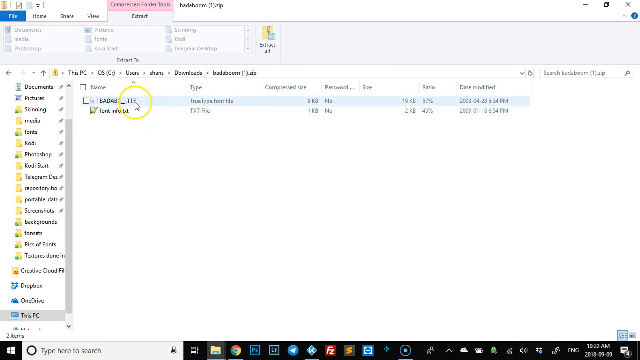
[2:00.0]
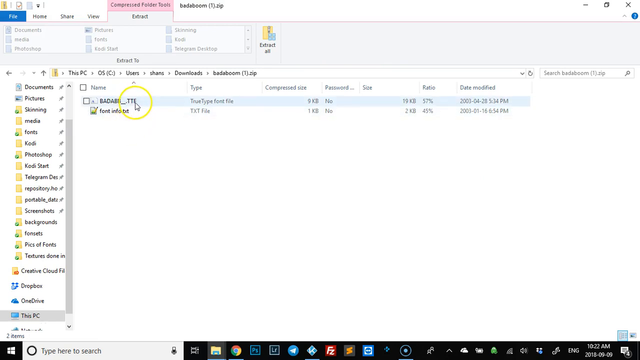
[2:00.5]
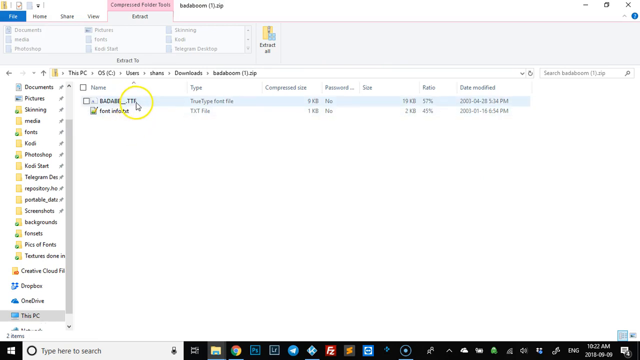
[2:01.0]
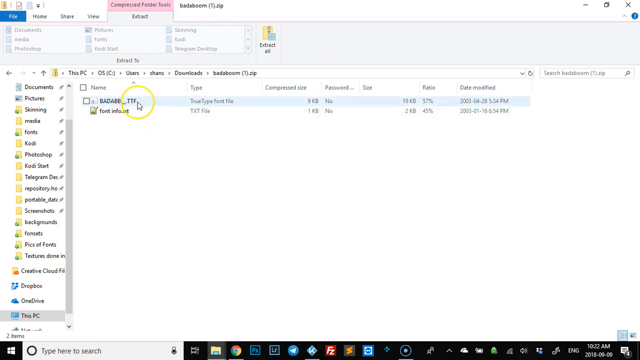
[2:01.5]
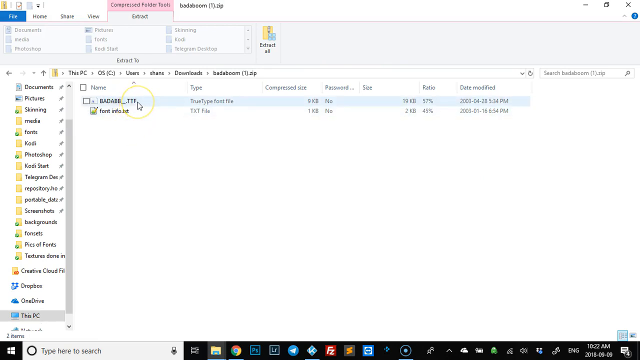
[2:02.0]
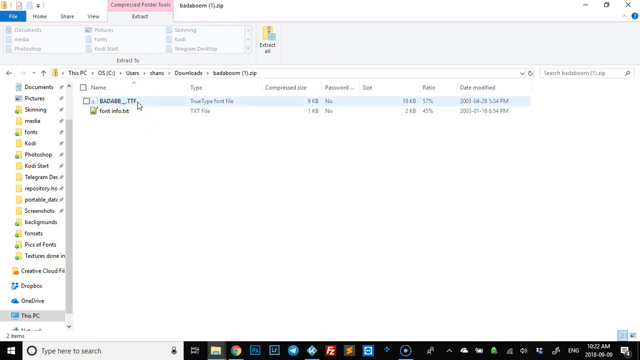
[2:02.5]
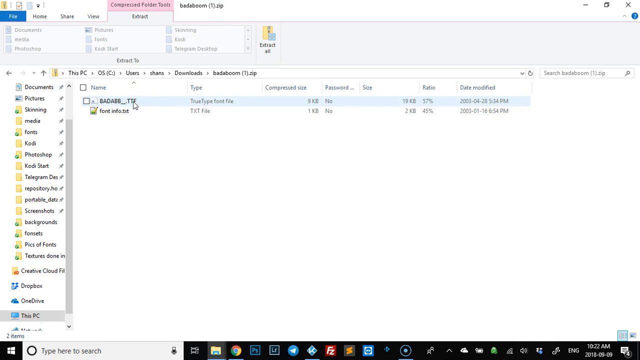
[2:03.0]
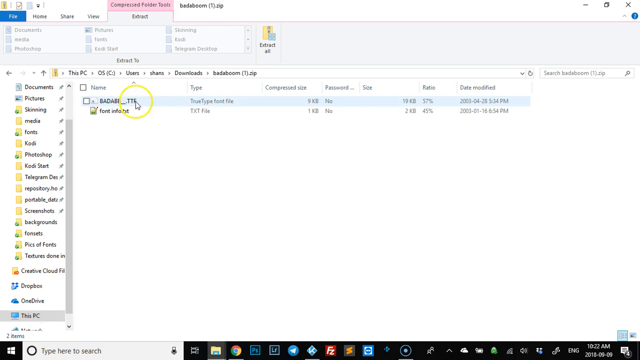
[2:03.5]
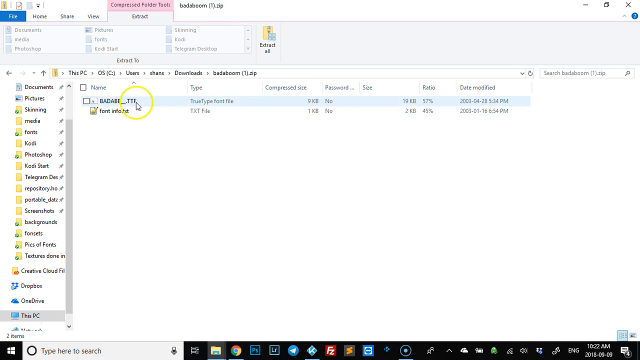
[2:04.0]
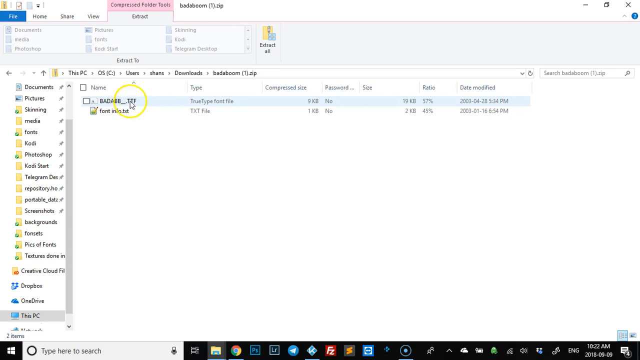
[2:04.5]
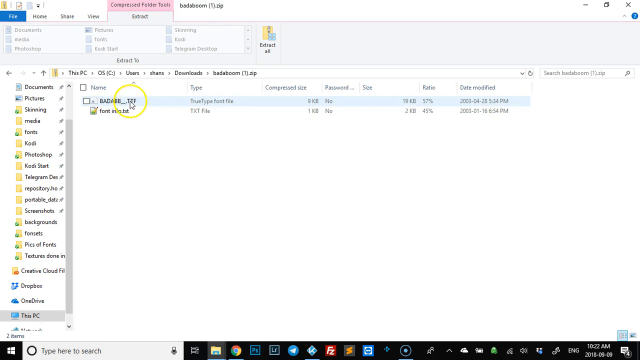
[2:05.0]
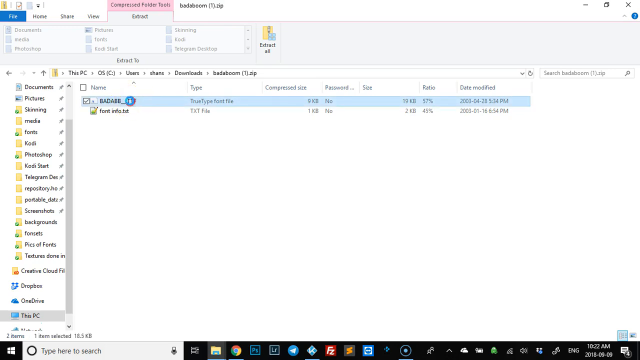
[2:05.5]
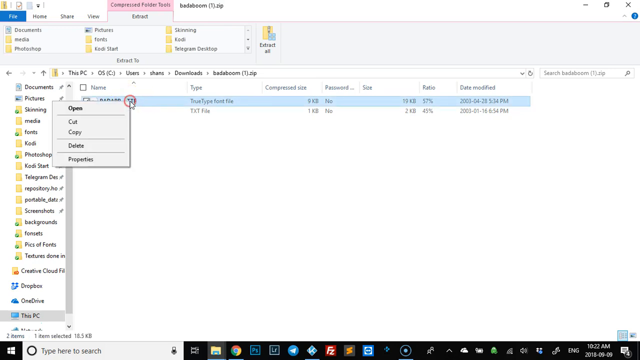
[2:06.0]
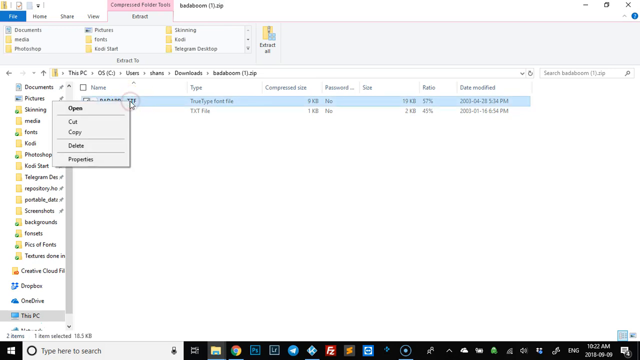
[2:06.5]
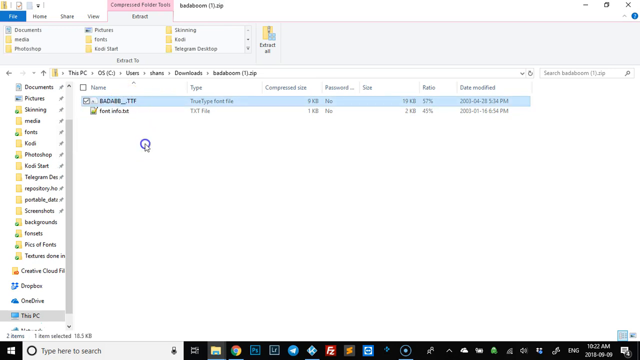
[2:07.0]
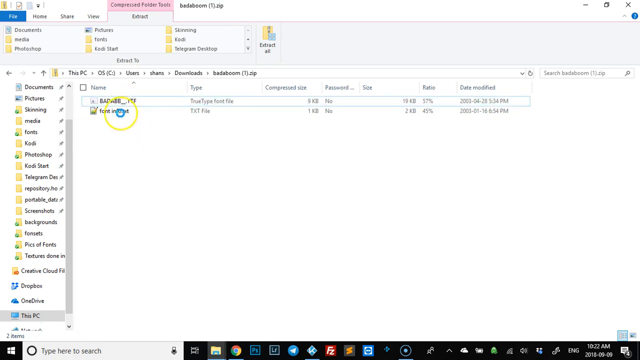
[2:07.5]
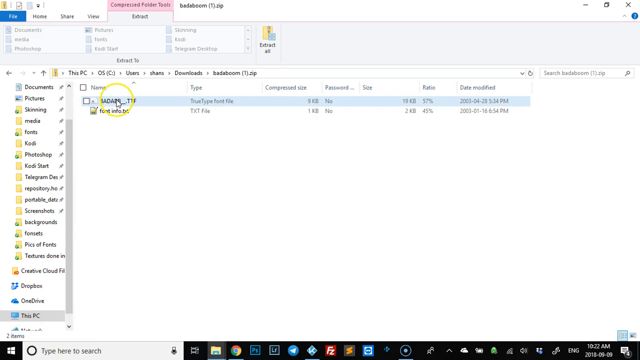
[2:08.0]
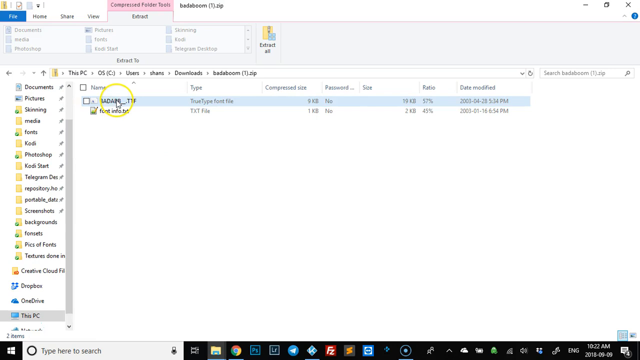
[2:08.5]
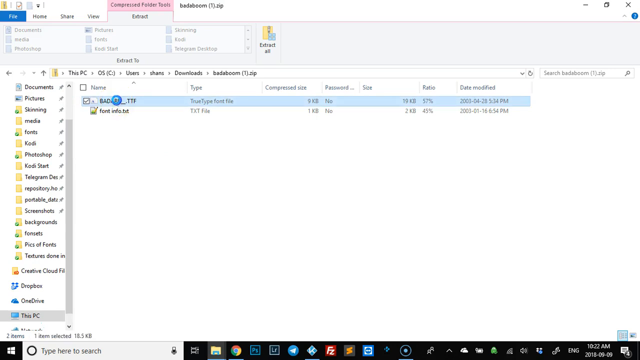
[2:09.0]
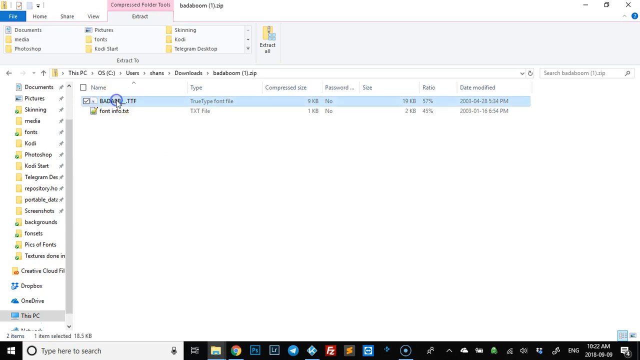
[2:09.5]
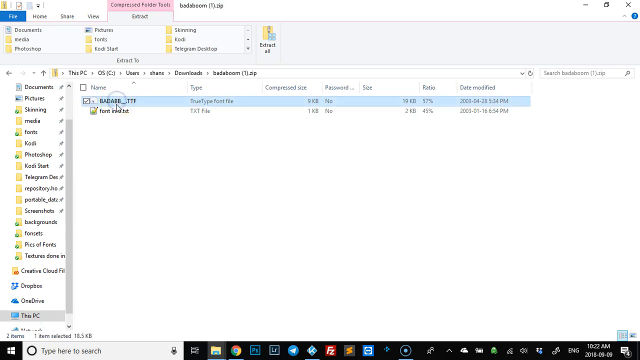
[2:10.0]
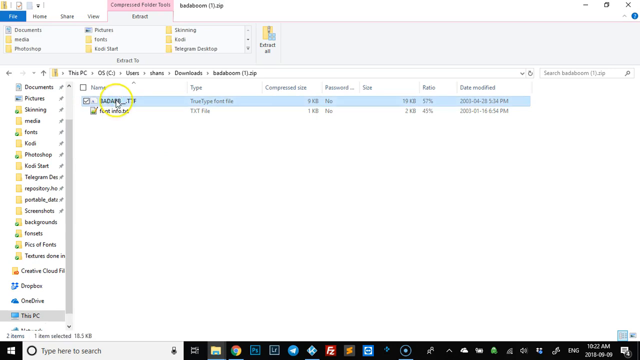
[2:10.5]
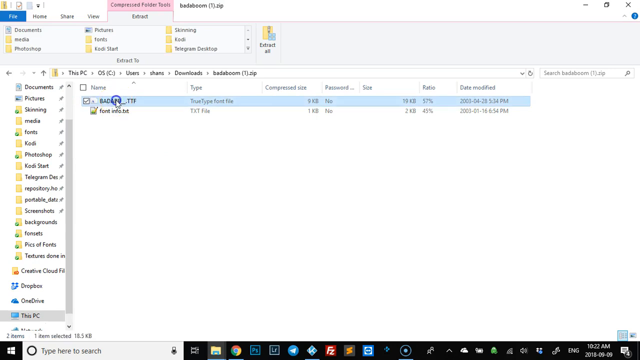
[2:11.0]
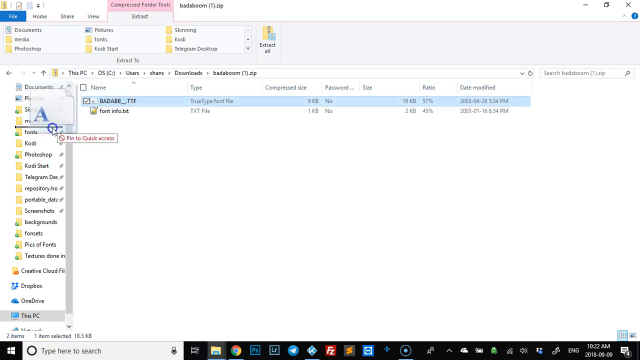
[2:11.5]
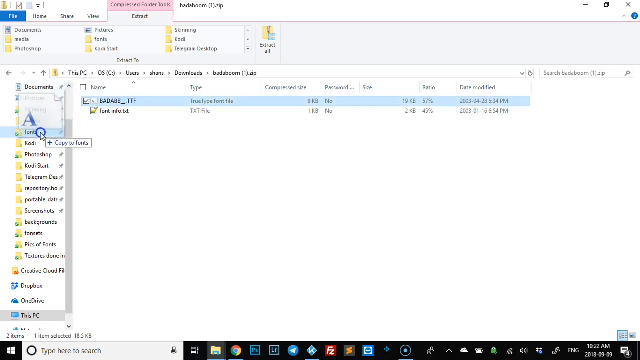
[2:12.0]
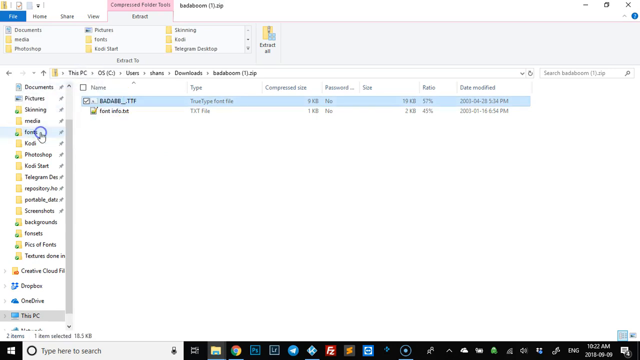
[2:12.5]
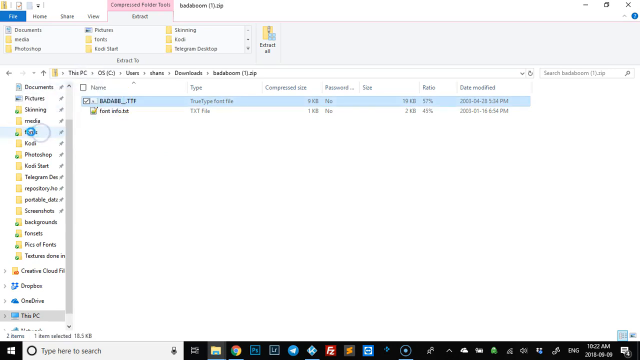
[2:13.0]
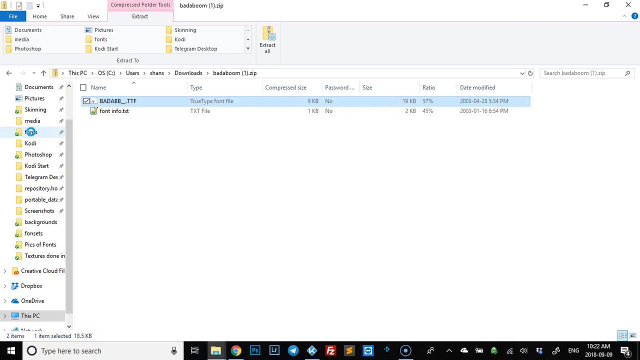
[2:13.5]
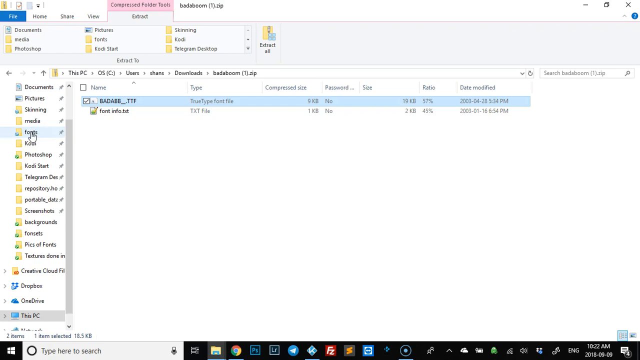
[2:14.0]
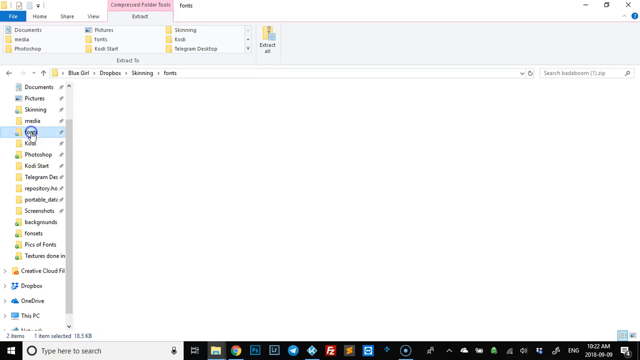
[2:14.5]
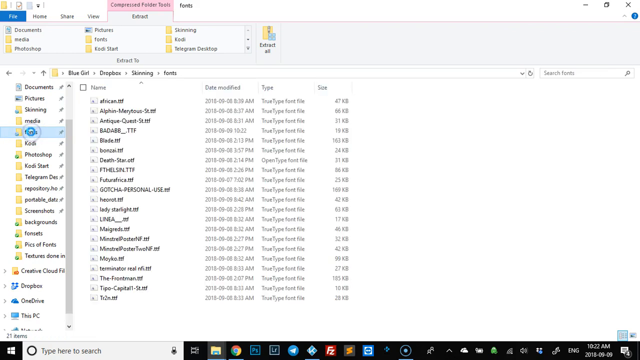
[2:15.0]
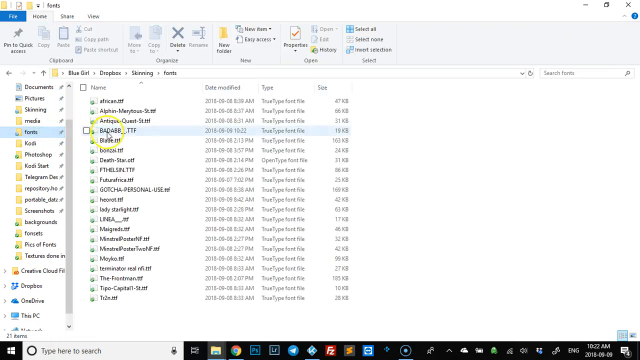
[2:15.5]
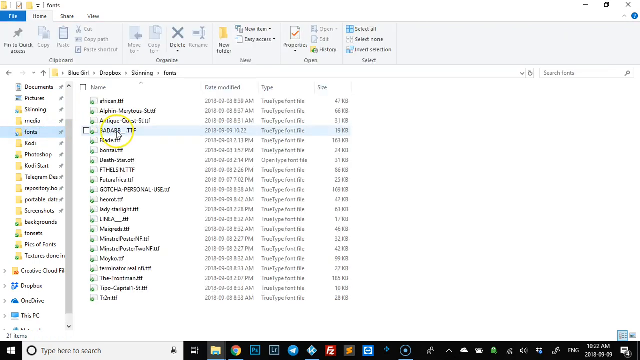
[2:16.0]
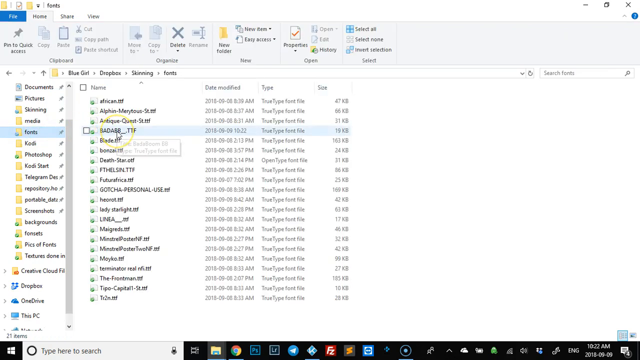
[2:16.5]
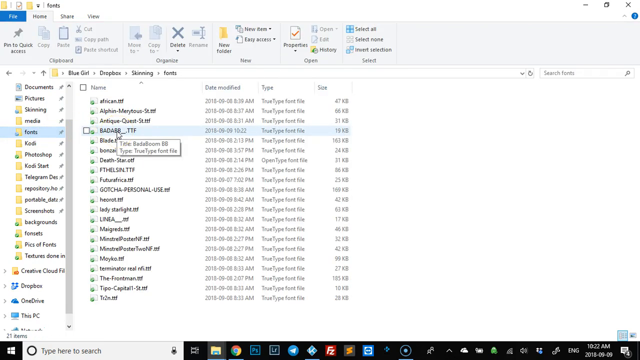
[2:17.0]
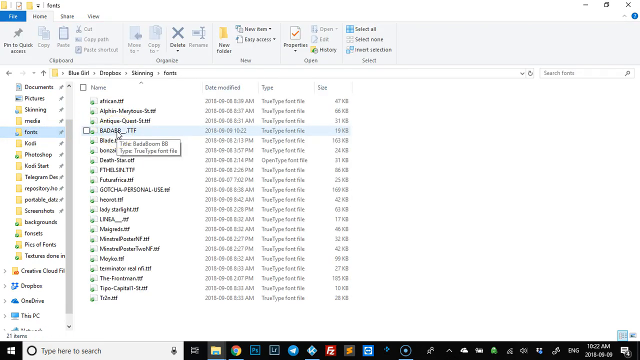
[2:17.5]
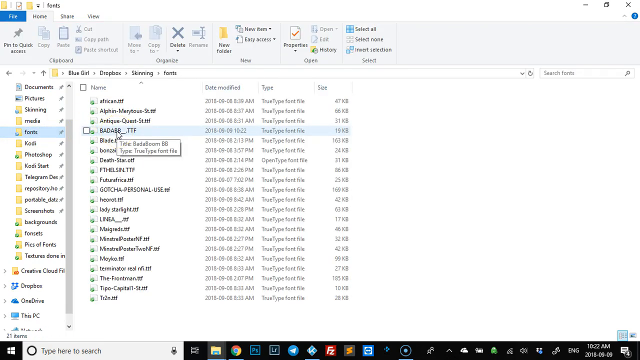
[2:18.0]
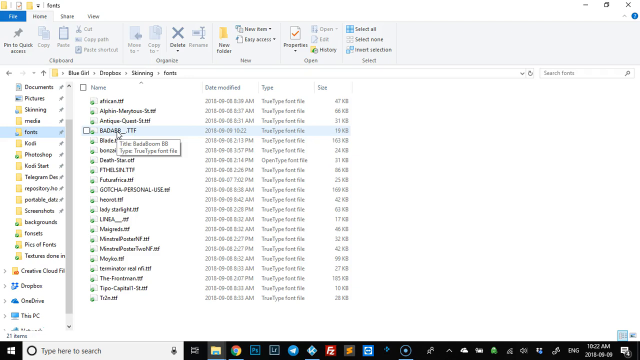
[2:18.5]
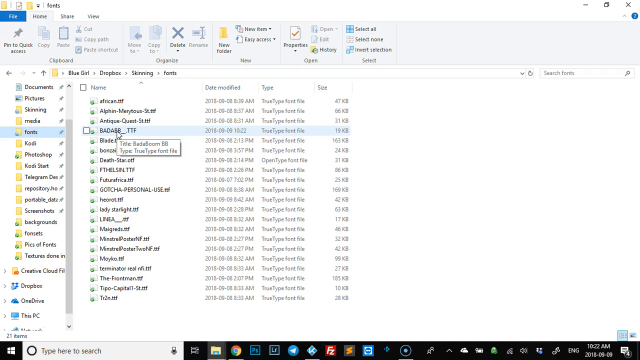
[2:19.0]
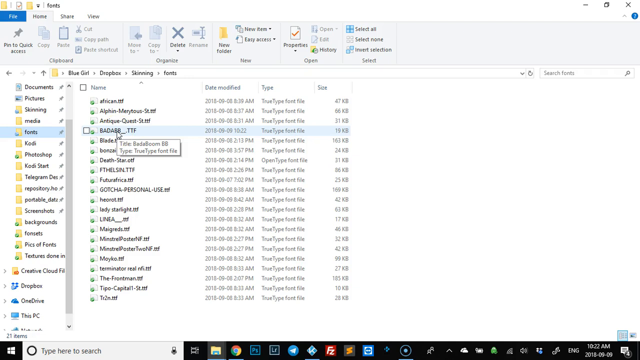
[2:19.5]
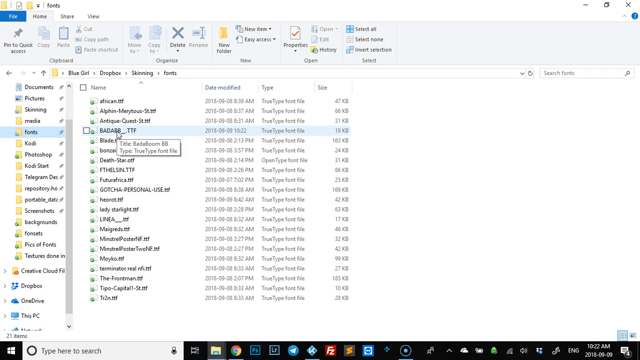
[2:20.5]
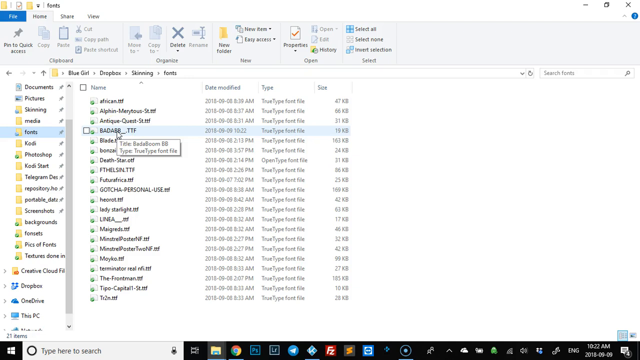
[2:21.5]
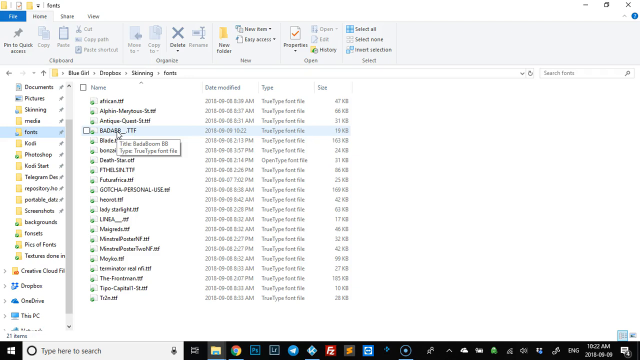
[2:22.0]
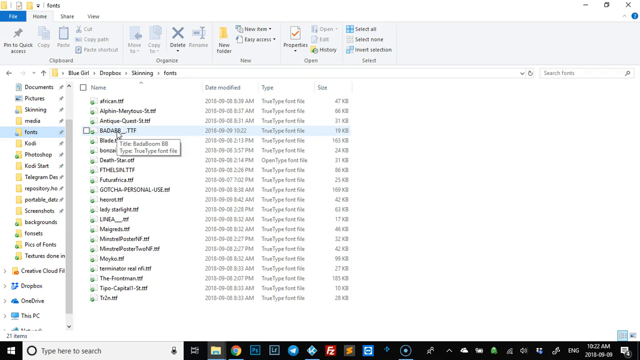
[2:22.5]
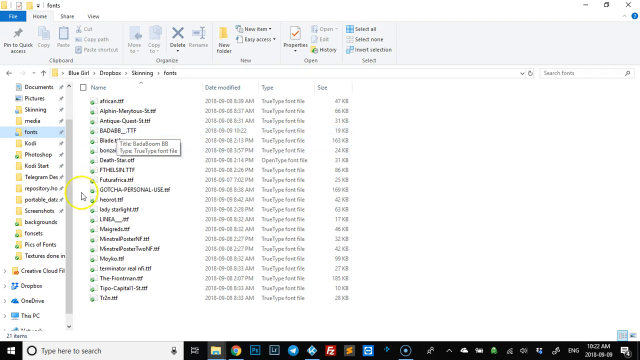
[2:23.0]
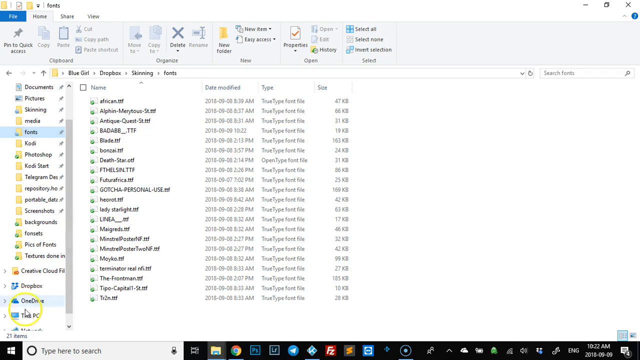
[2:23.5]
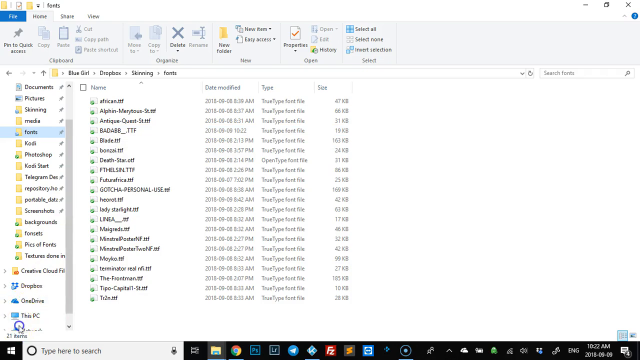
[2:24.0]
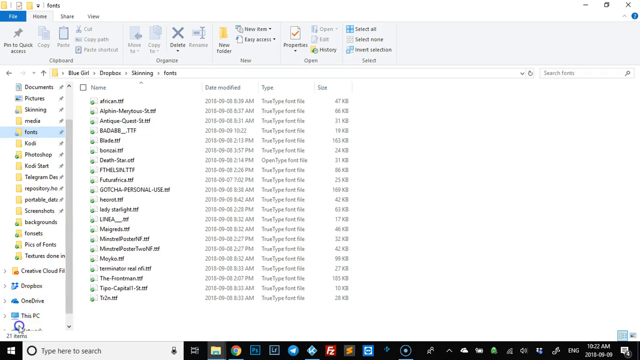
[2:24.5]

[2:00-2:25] Inside the BadaBoom font folder, a path shows where it is on the PC: a small folder icon, then "This PC," "OS," "Users," an illegible word, "Downloads," and "BadaBoom zip." The person clicks on the first item in the folder, which opens a smaller window; they click, the box is highlighted, and they drag and drop it into the font section, cutting and moving it. The font is now available within the font section, which is populated with other items, possibly about 20, each named to correspond with its contents.